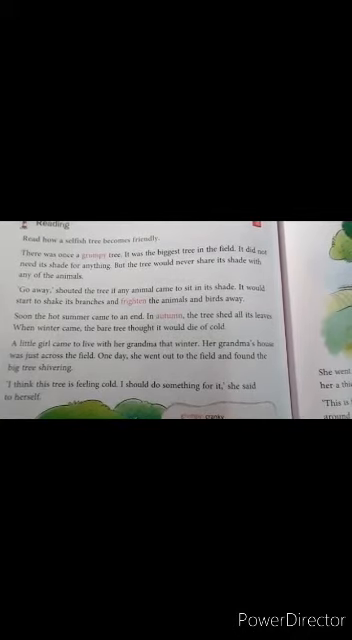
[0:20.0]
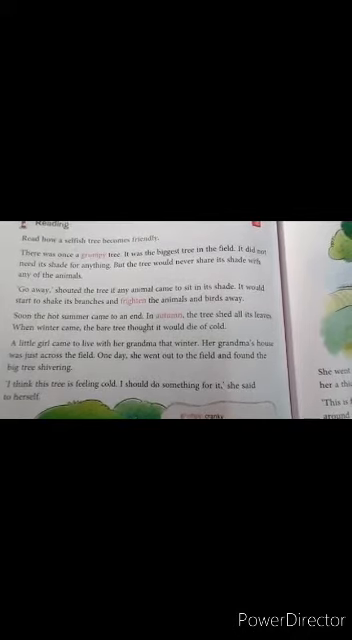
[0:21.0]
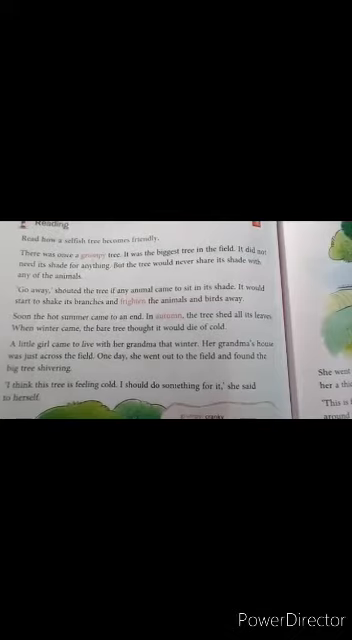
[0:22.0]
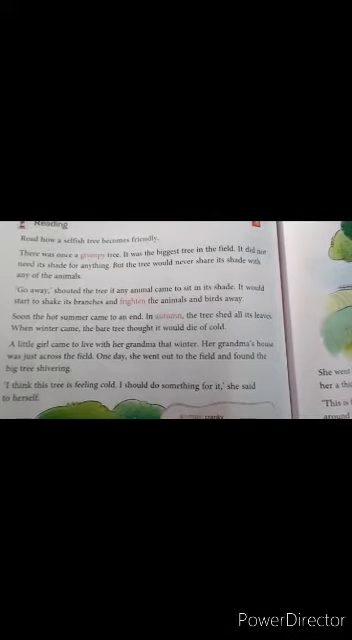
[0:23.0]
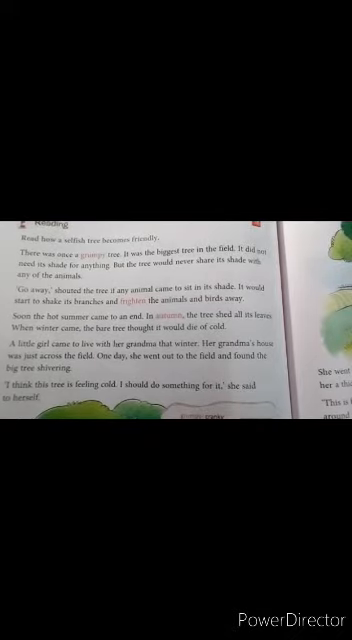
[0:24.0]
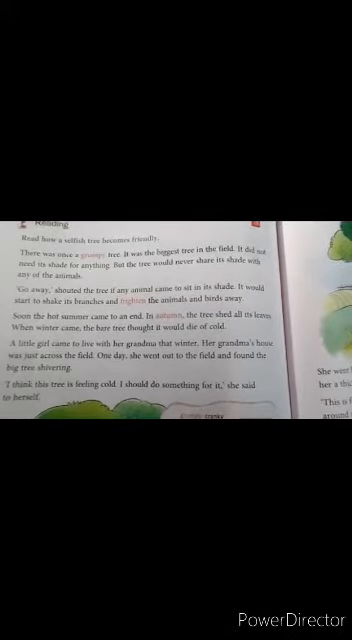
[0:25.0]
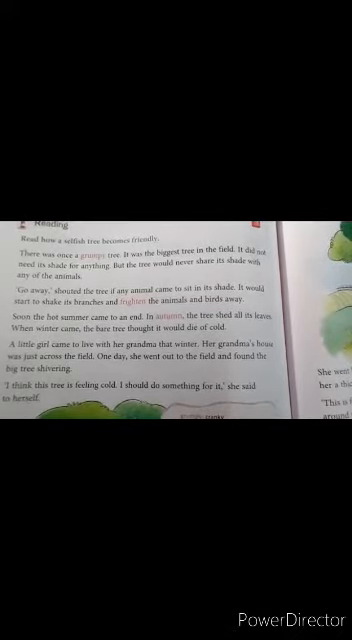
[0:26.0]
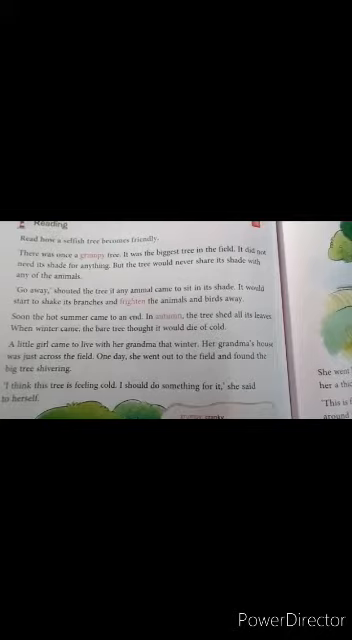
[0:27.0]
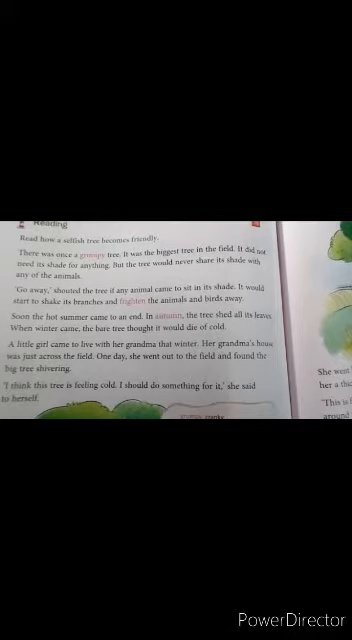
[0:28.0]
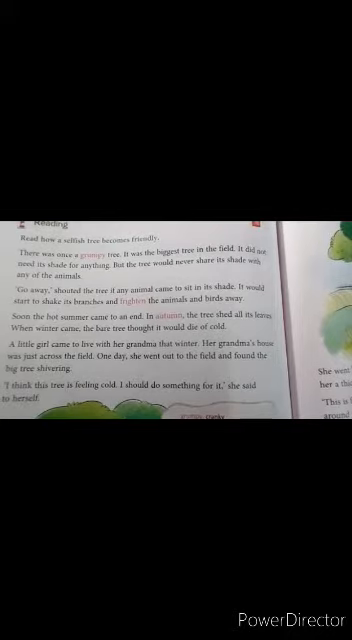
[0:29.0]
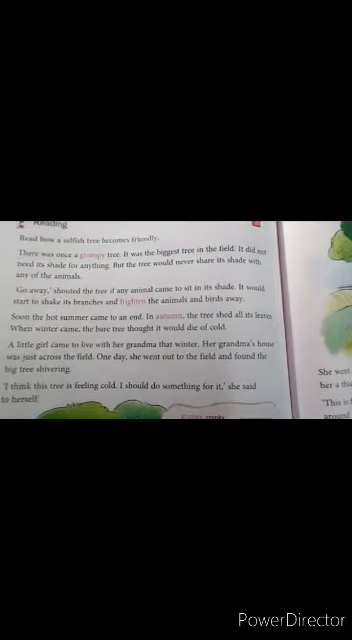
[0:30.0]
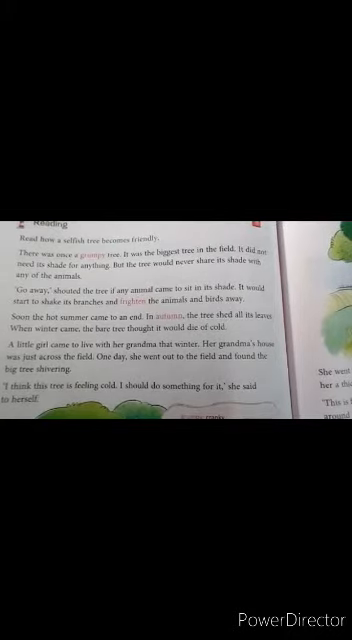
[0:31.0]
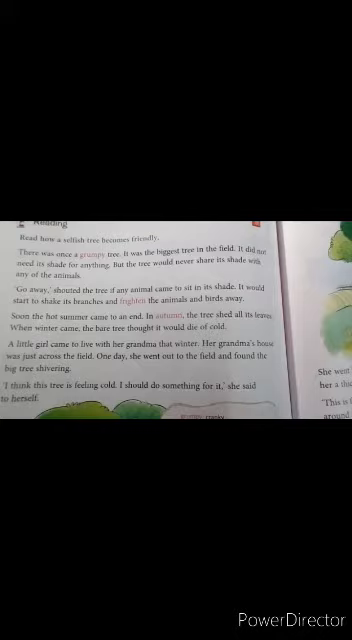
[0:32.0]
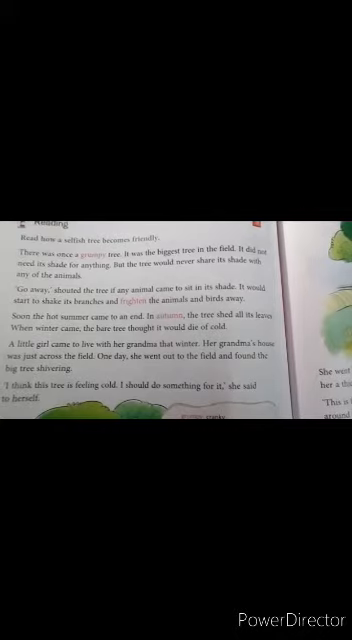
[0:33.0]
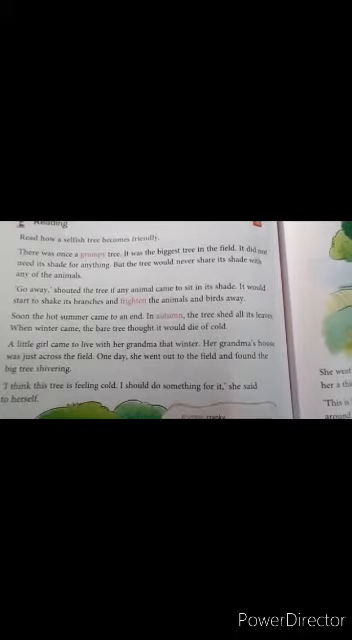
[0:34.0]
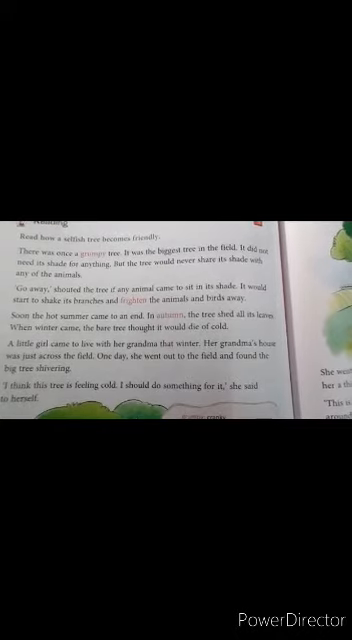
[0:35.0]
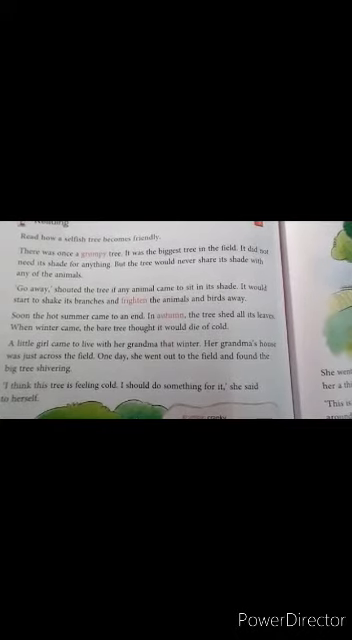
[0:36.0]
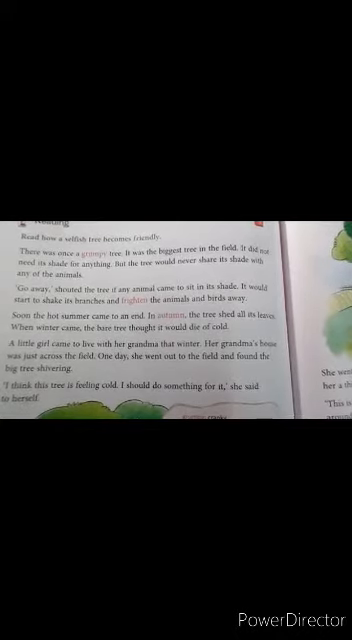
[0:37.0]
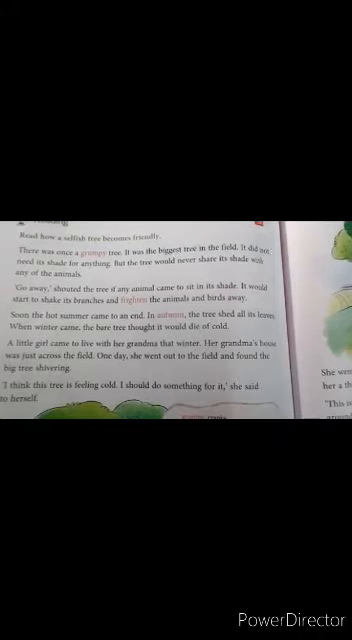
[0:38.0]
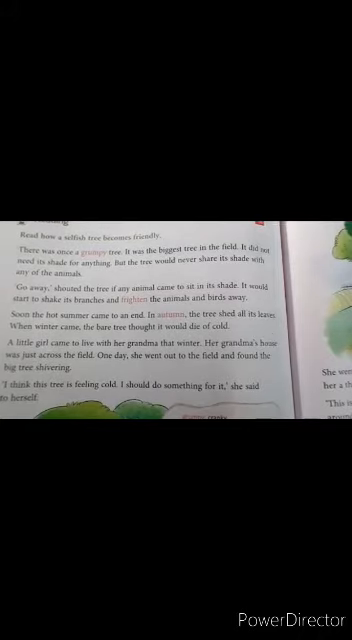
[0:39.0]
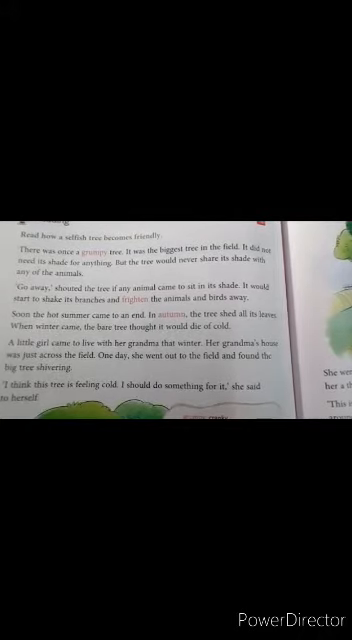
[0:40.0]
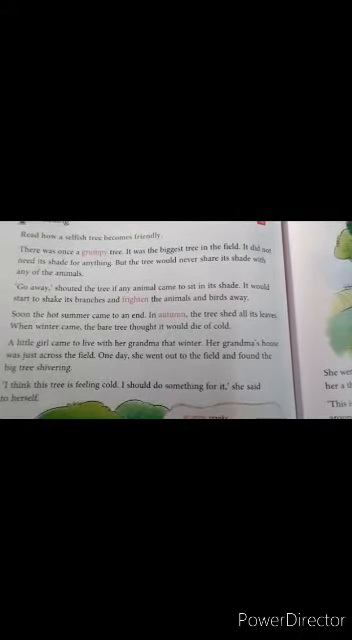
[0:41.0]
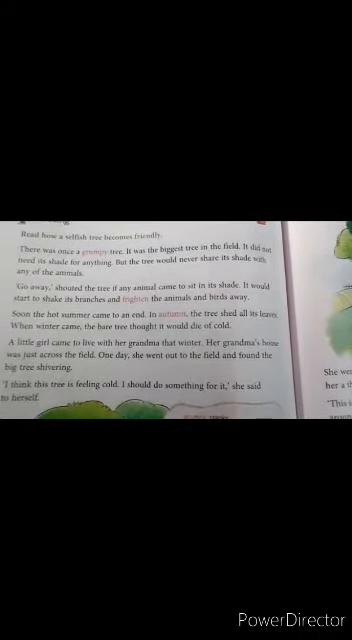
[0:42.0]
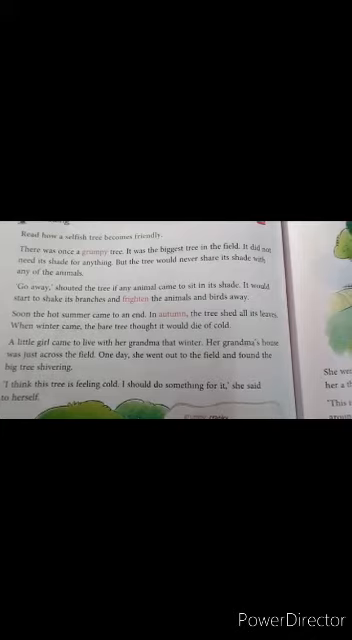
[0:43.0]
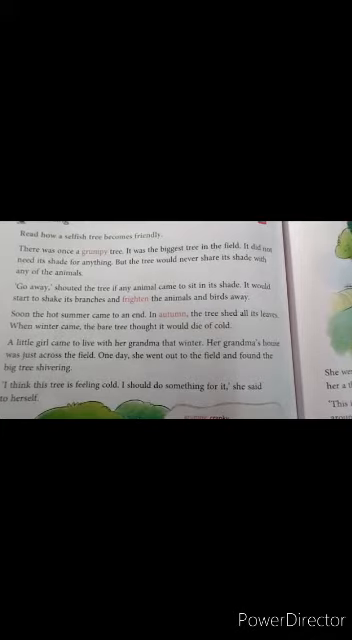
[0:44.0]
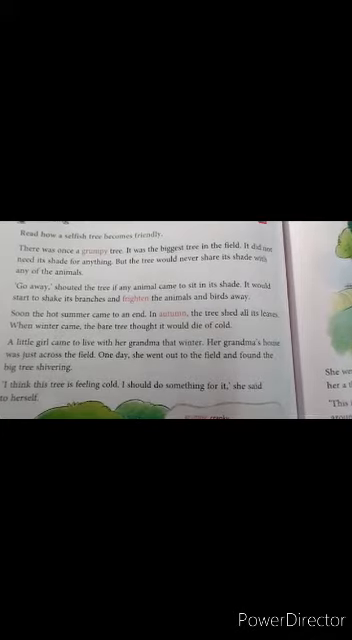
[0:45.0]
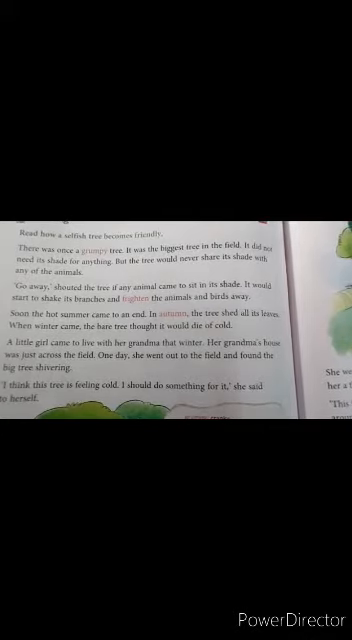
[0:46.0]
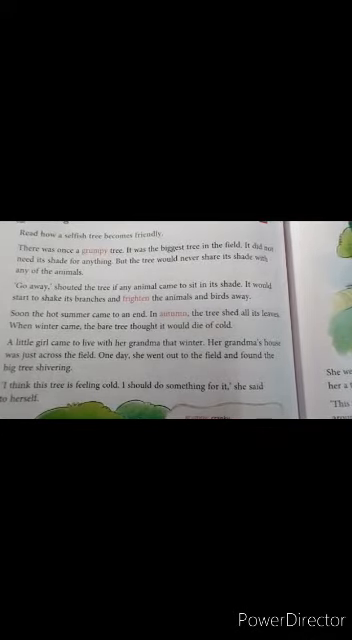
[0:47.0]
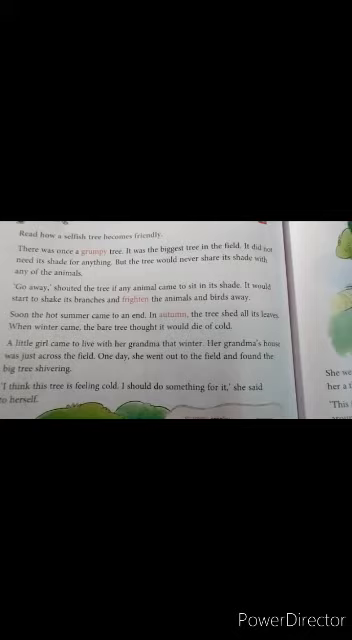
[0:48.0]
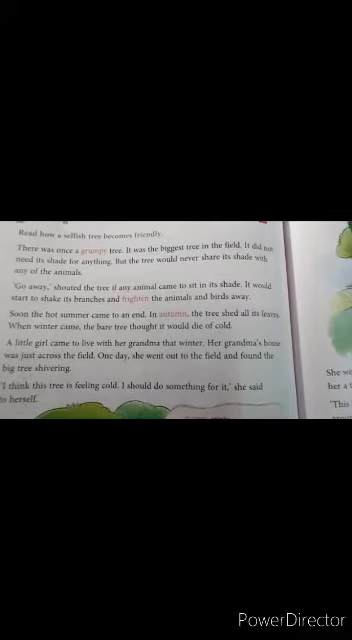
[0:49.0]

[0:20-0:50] Someone has a child's book open; its title is not shown. A watermark at the bottom reads "power director." The book has illustrations that are hard to make out, and the wording is blurry. The first visible page has four paragraphs, and at the bottom of the page is the top of what looks to be a tree. The crease between the pages runs down the middle, and the beginning of the other page is visible, with an illustration on the viewer's left and wording underneath it.